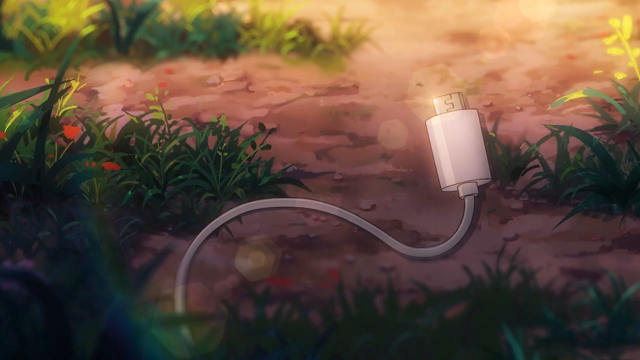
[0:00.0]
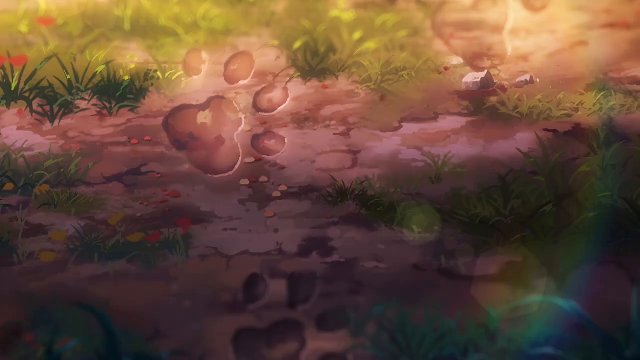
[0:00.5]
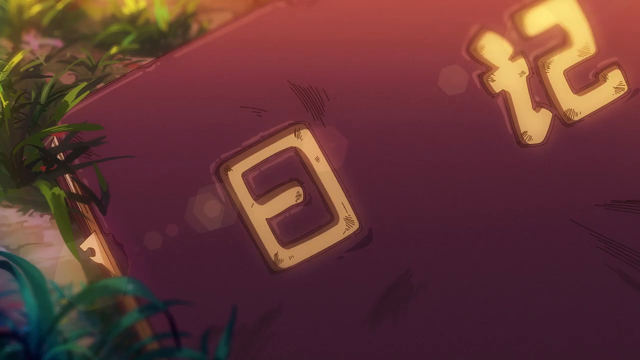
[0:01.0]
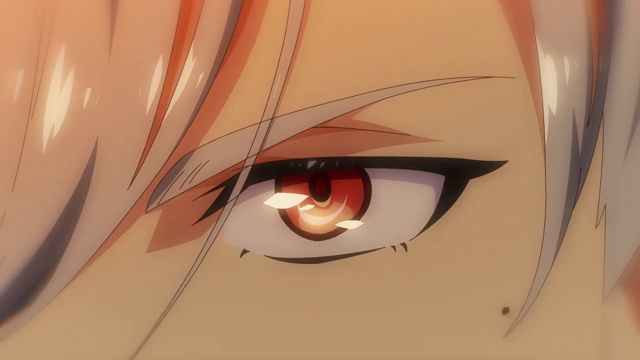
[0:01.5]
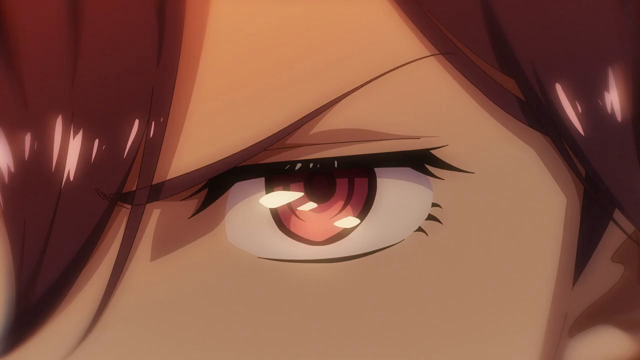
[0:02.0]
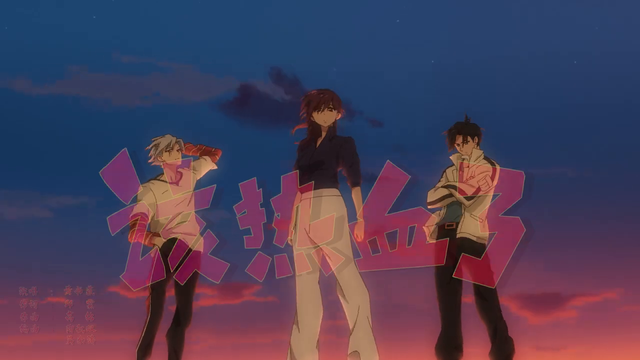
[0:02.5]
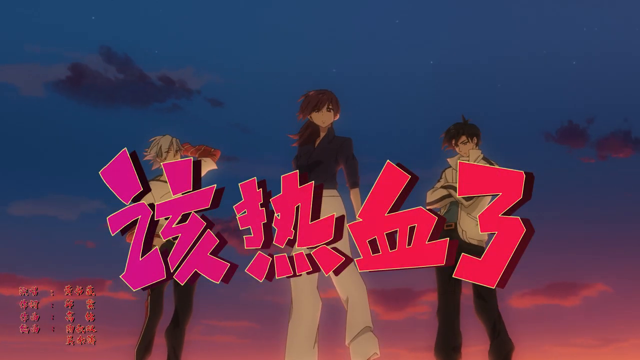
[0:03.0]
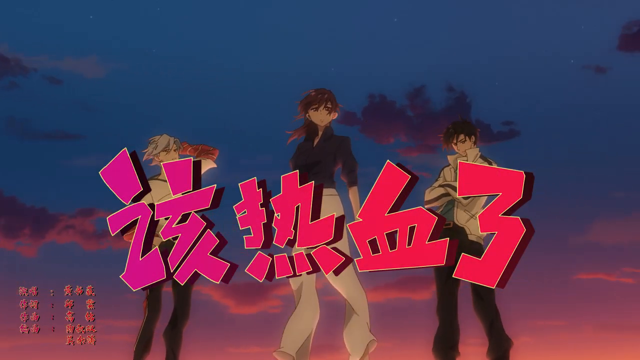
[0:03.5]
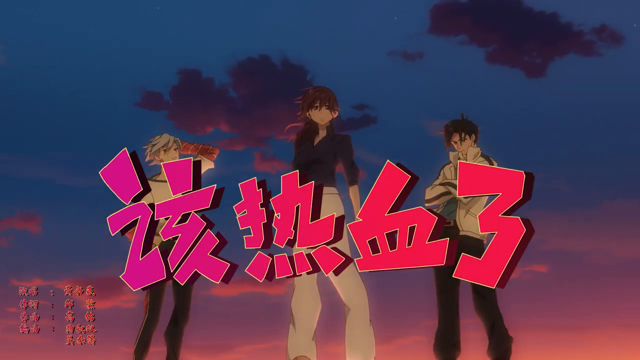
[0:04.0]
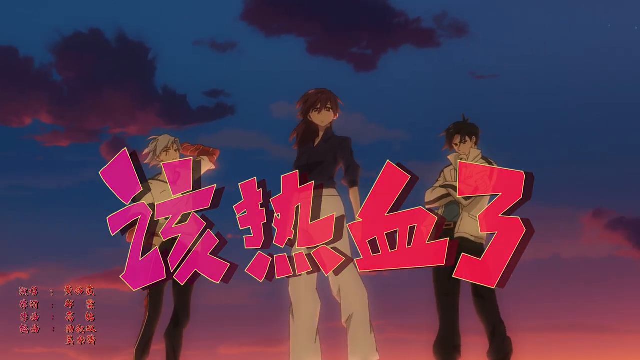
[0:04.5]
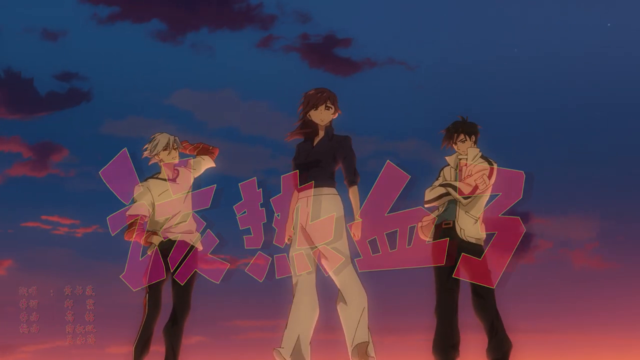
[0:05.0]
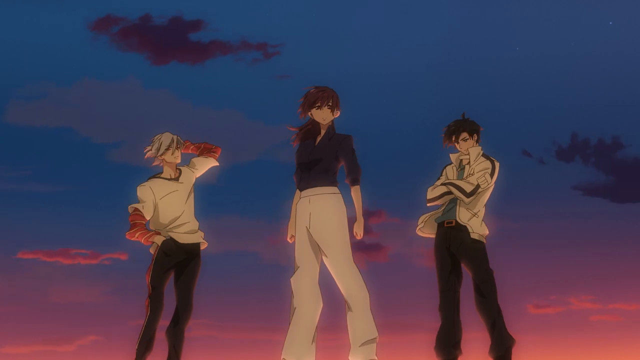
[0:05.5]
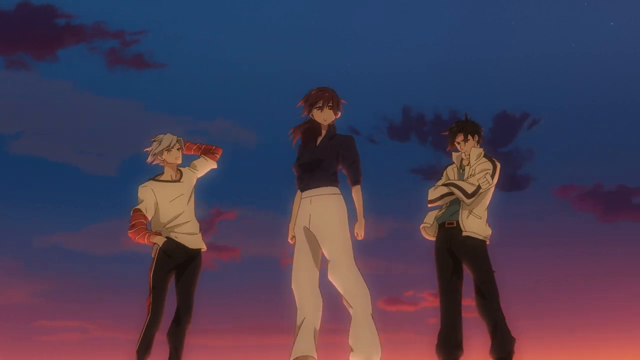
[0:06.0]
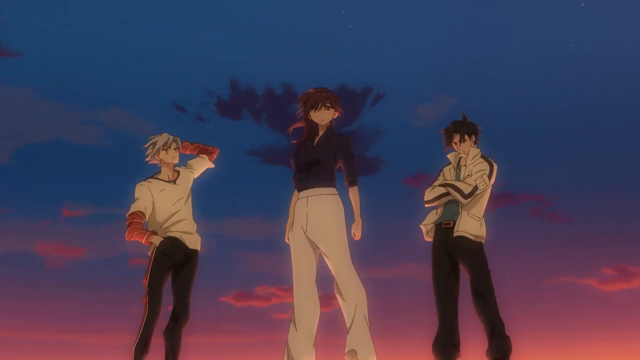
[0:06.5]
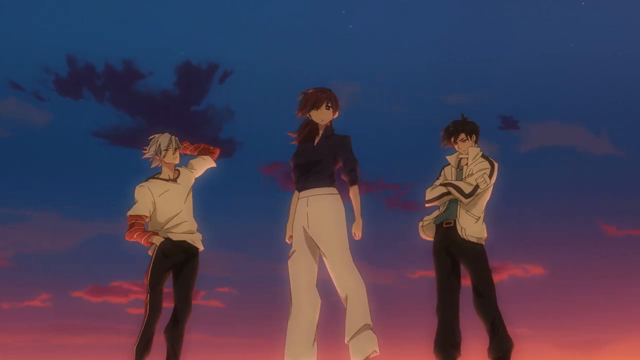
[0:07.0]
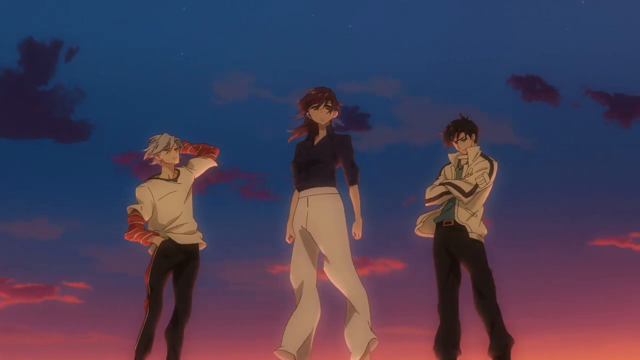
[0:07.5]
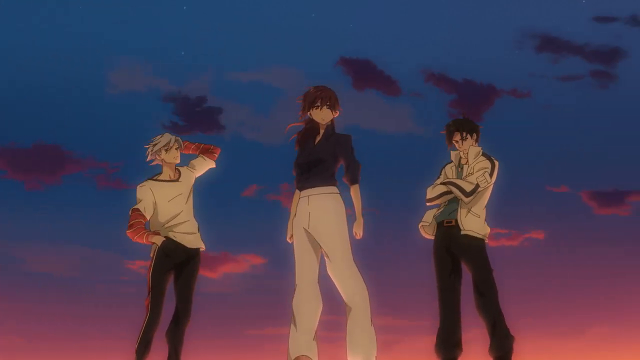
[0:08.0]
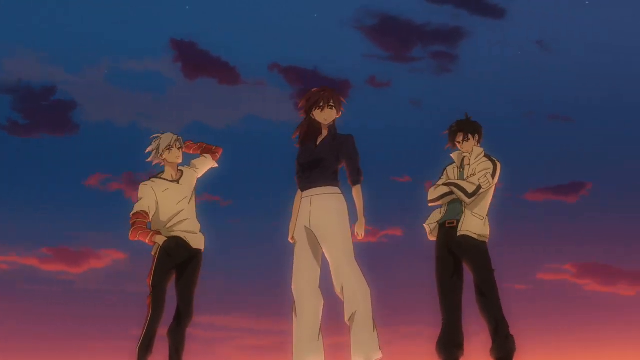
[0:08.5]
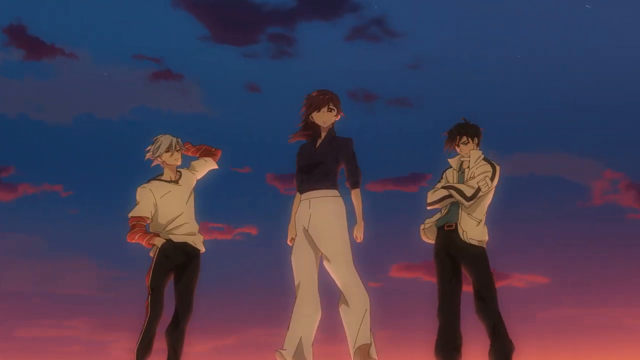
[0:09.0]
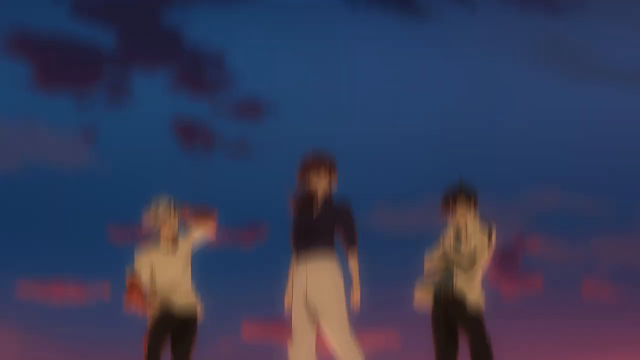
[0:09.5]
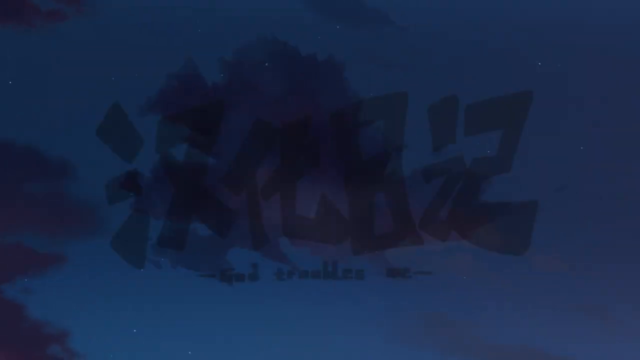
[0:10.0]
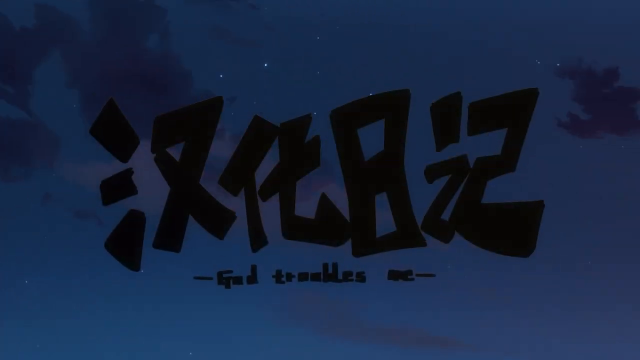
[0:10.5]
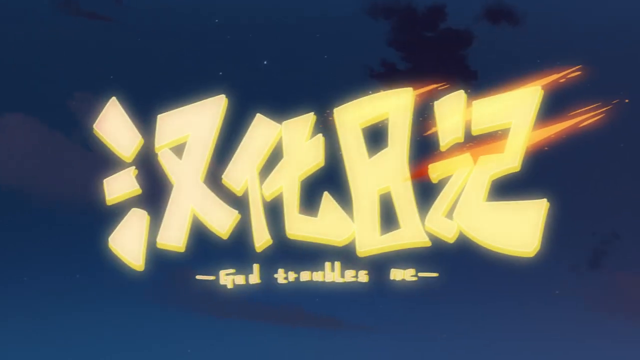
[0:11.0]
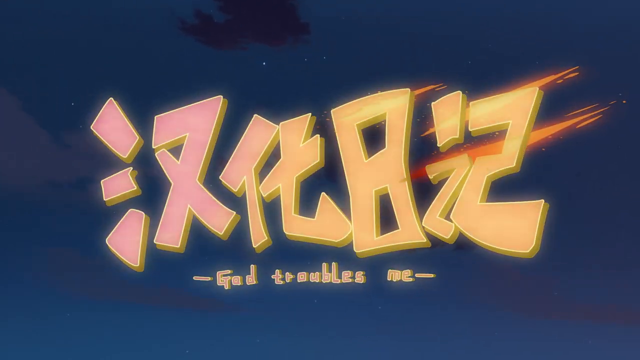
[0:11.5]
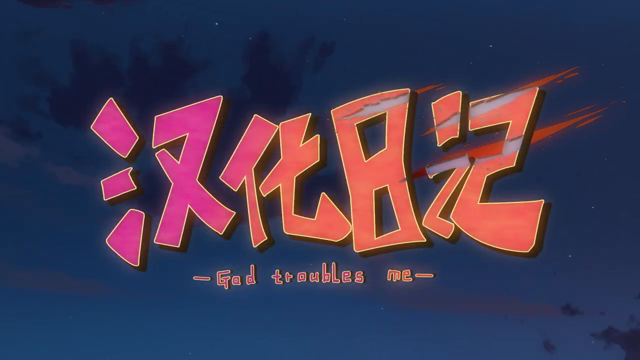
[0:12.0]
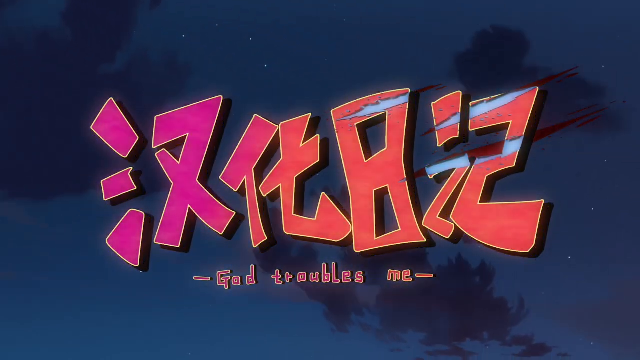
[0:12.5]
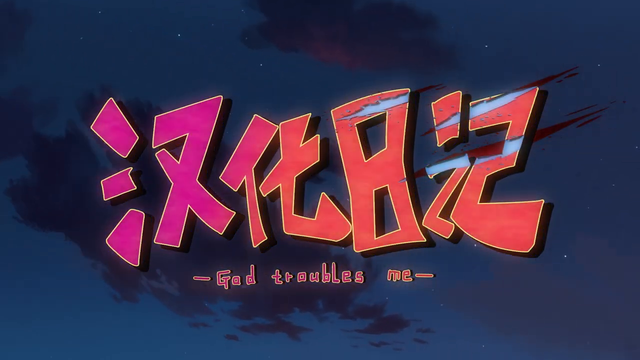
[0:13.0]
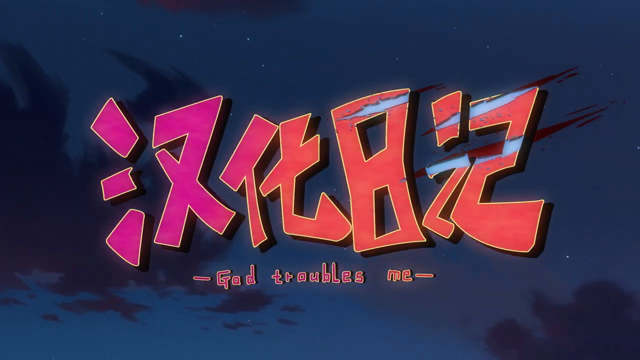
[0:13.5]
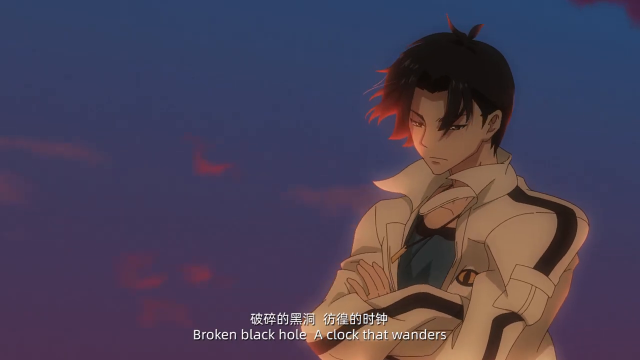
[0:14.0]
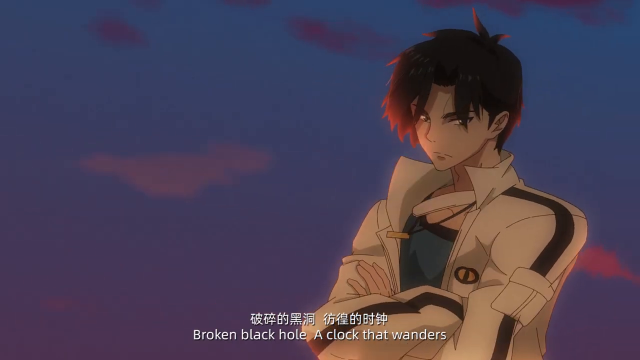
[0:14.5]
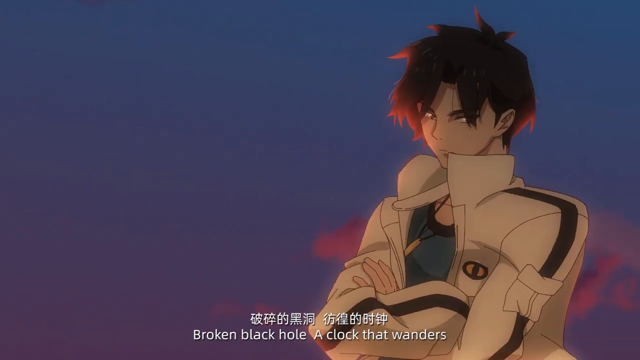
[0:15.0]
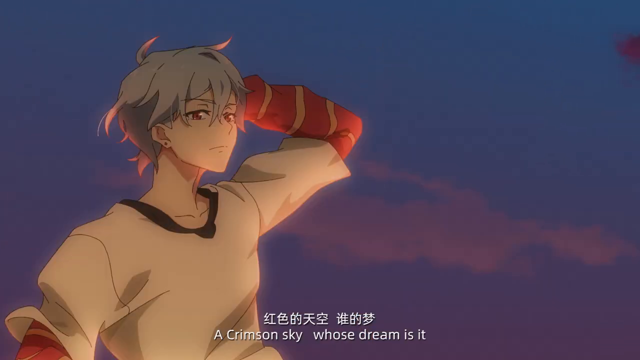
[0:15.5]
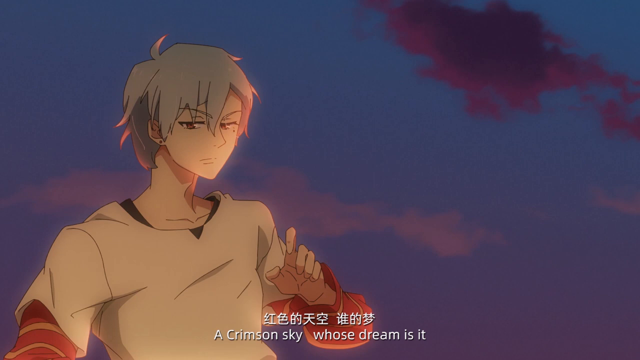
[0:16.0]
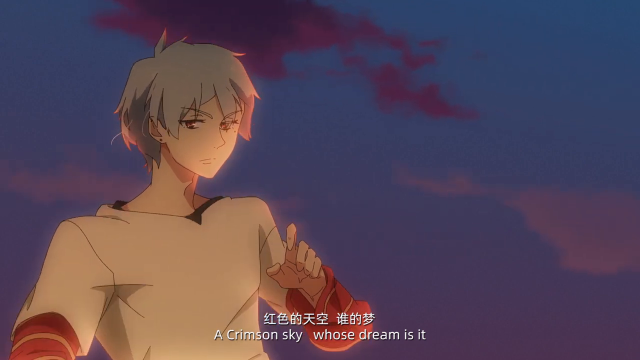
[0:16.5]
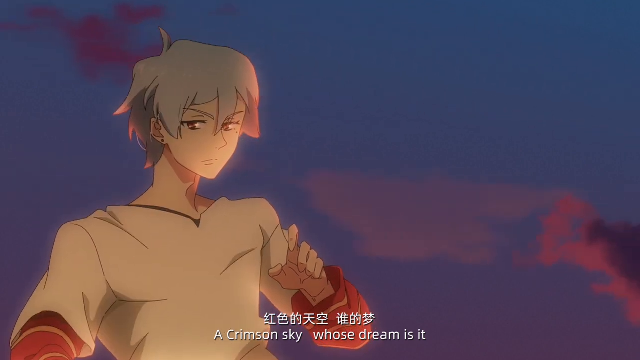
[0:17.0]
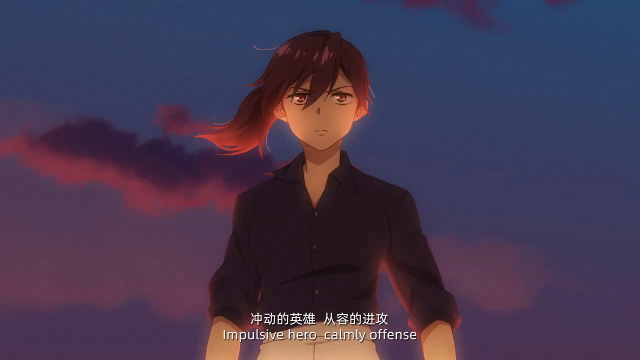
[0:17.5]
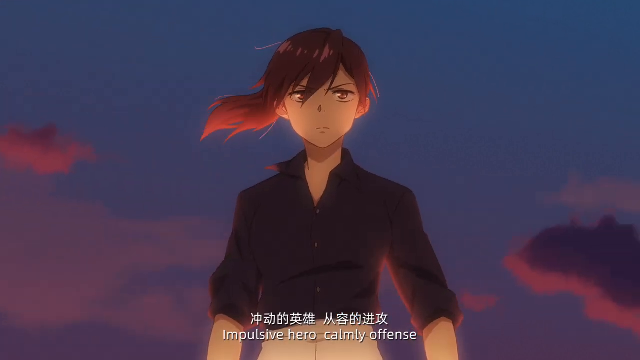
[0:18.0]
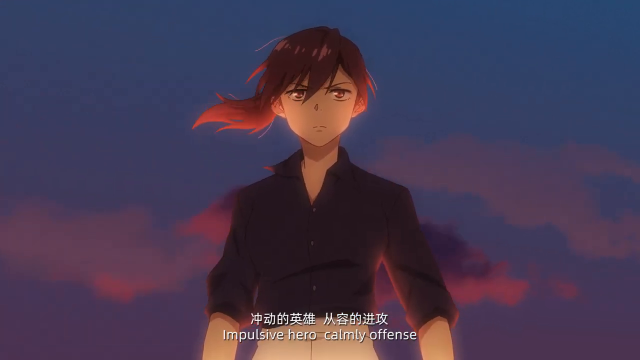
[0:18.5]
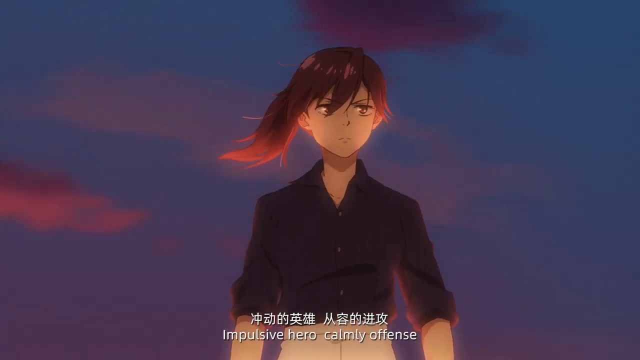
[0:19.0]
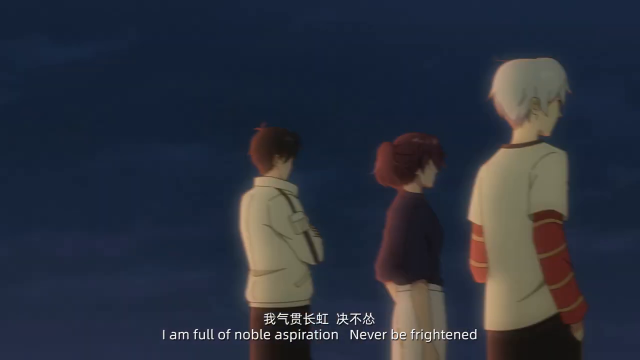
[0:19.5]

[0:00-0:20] The video appears to be an anime opening, apparently the opening theme song. It starts on a phone charger on the ground outside, on dirt surrounded by a few small plants, some of which have red berries. There is sunlight above it, glinting off the plug-in part of the charger. The view rapidly switches to a paw print embedded in the dirt, then to a close-up of a brown object with what looks like a 0 and a 12 on it, though it is too zoomed in to tell whether that is correct or whether it is 21 0 upside down. The object appears to have a gold device on one side, possibly a lock. Several close-ups of eyes follow, cutting back and forth, and then the view zooms out to show three characters who presumably had those eyes. Red text appears on screen, apparently Japanese, with kanji in the first part. The characters are shown again, and underneath the kanji the text says "God troubles me". The camera spins upward, then shows one character and then another. Text at the bottom carries subtitles, presumably for the song's lyrics.